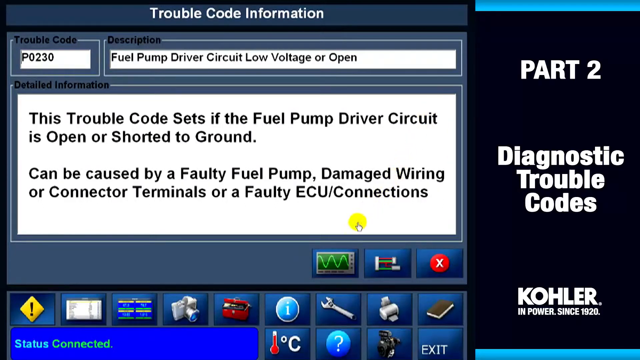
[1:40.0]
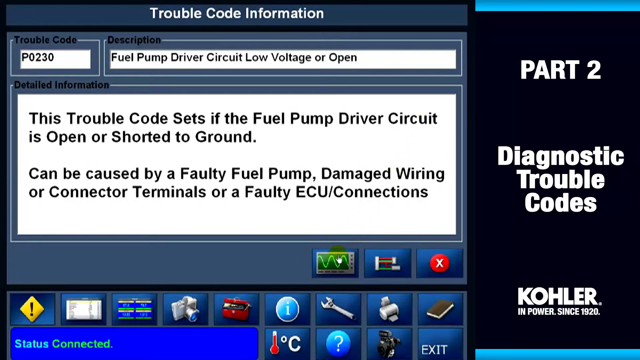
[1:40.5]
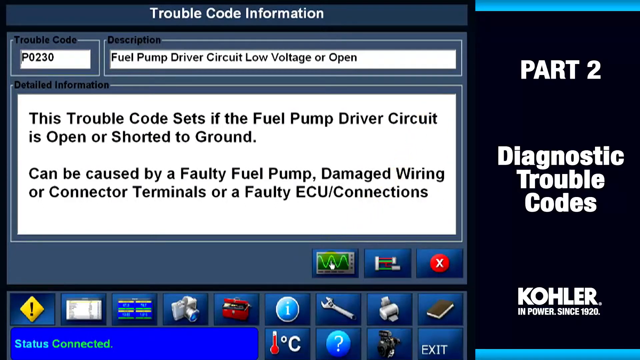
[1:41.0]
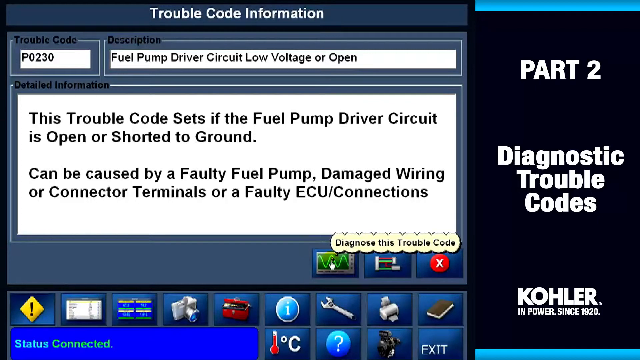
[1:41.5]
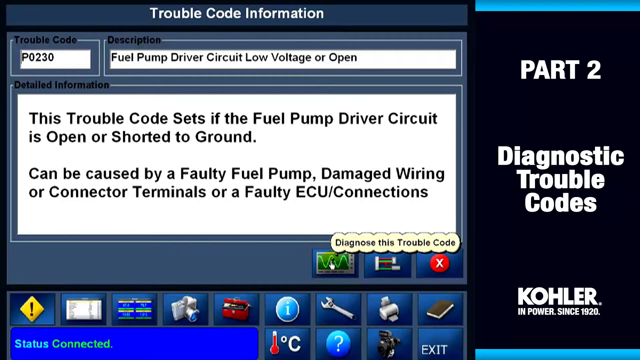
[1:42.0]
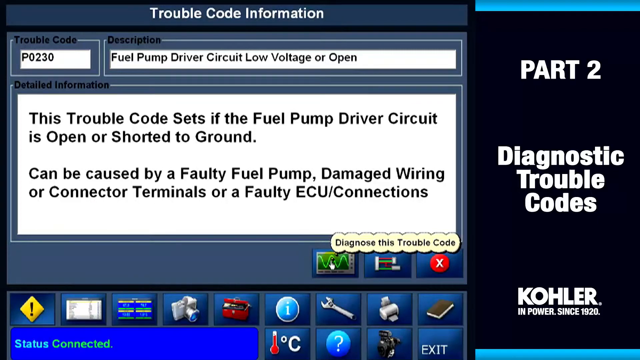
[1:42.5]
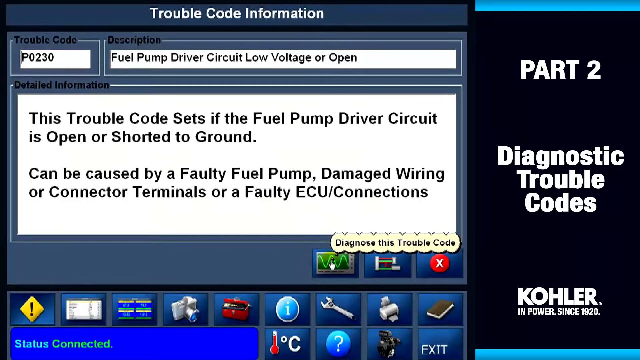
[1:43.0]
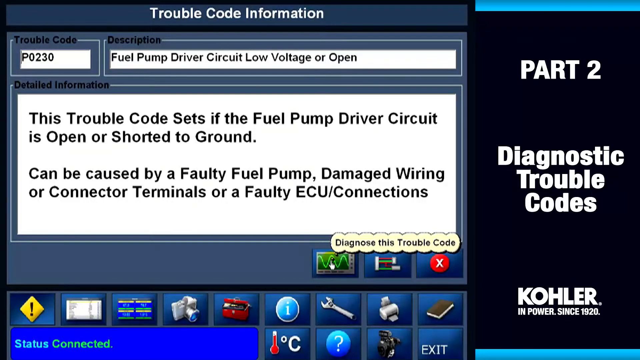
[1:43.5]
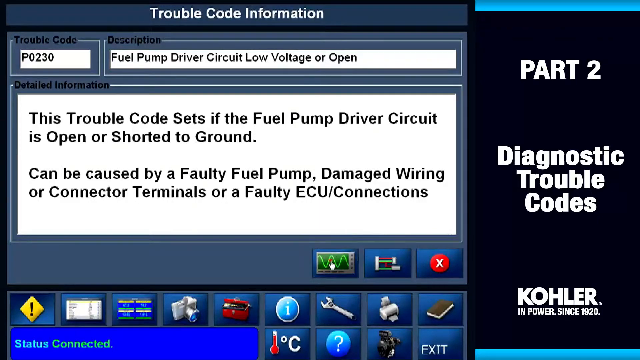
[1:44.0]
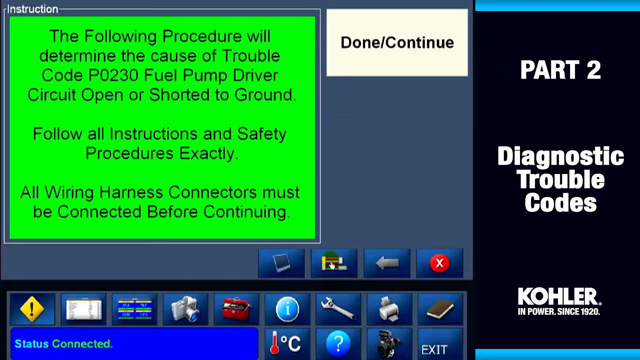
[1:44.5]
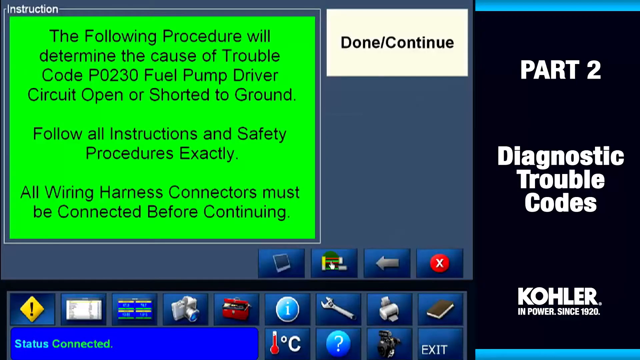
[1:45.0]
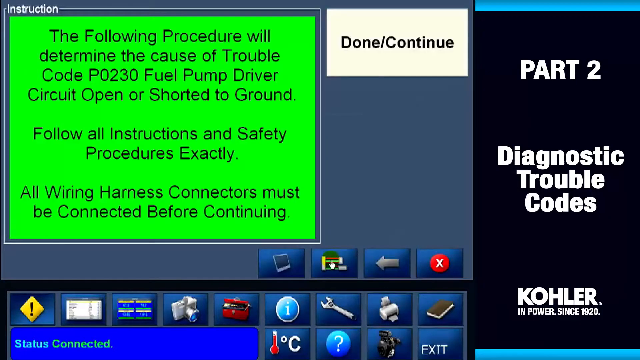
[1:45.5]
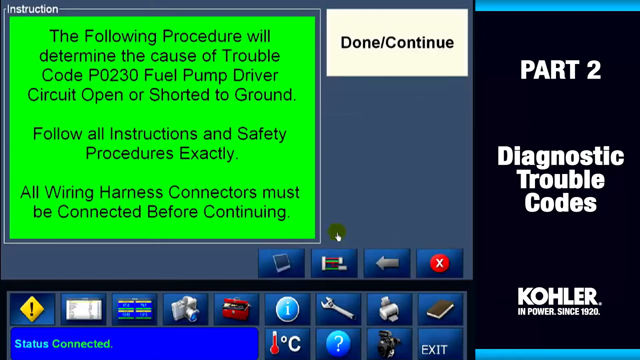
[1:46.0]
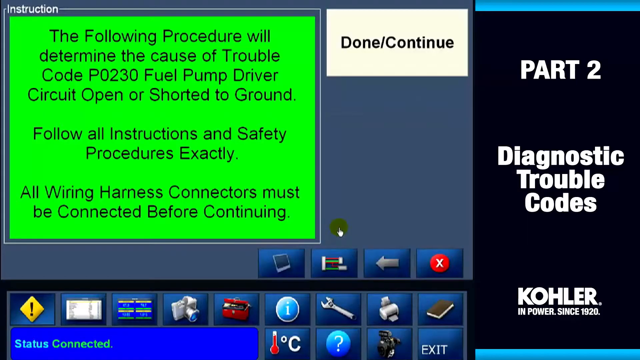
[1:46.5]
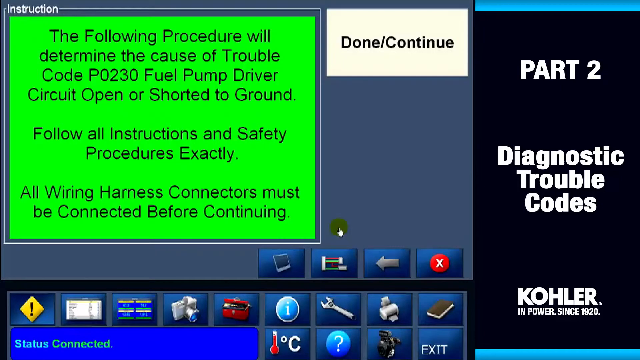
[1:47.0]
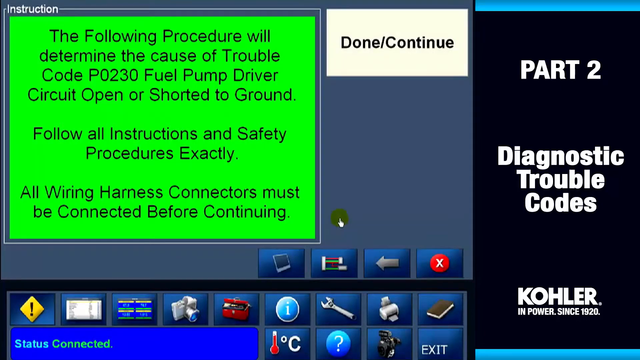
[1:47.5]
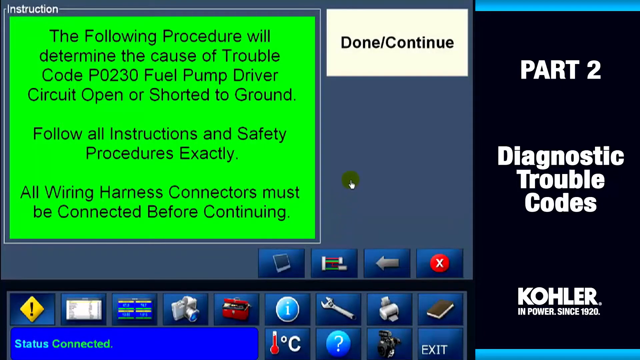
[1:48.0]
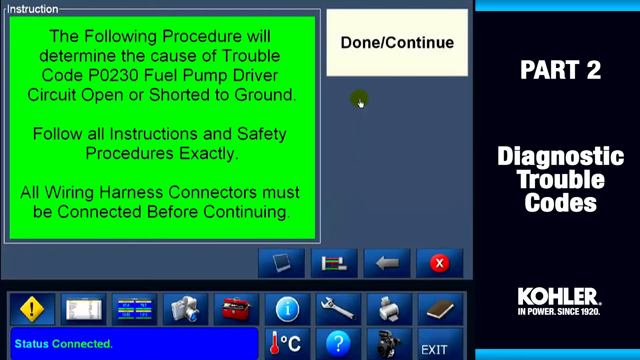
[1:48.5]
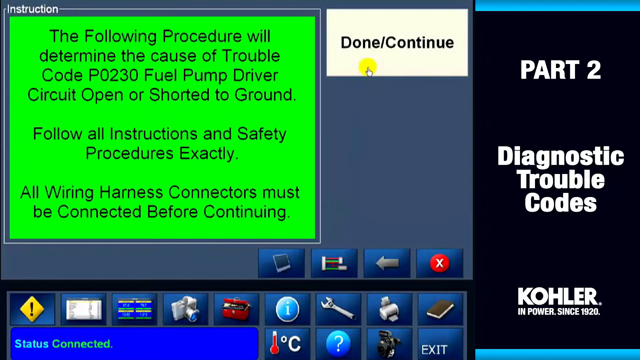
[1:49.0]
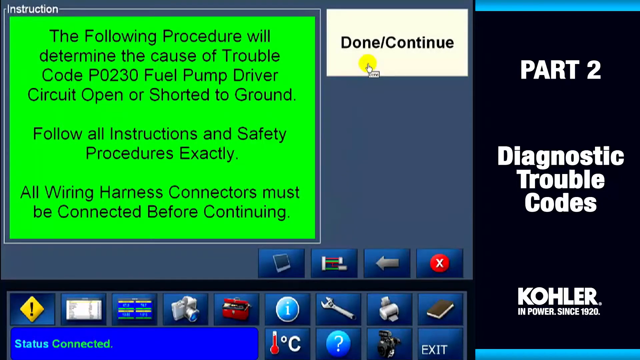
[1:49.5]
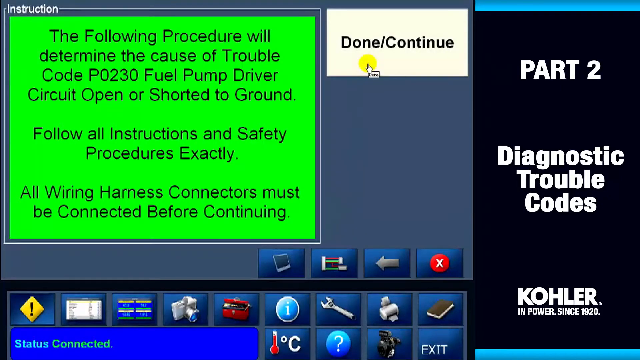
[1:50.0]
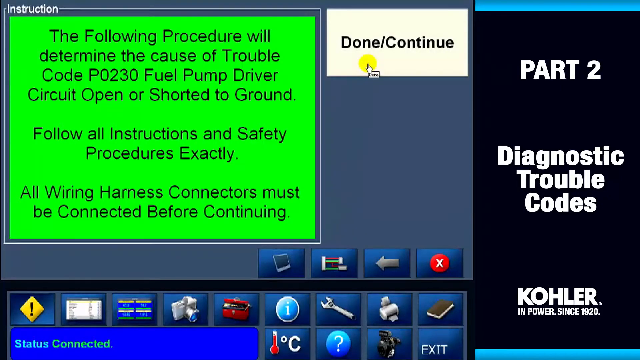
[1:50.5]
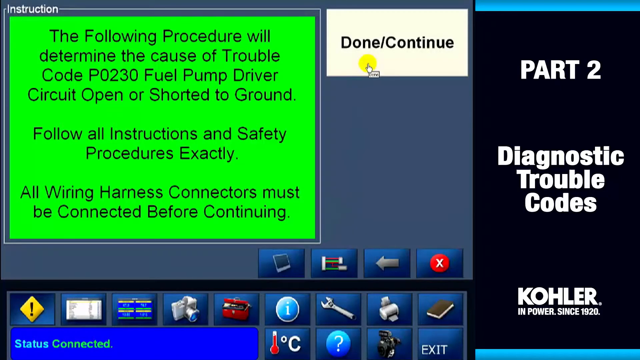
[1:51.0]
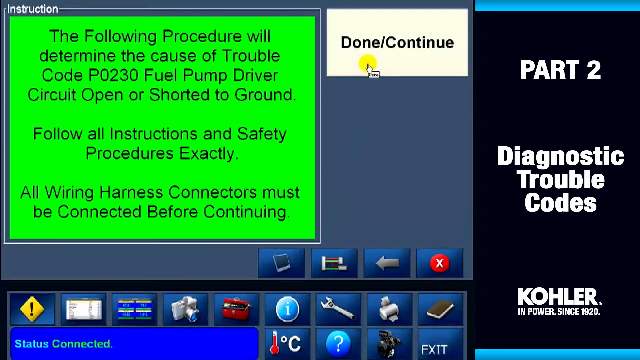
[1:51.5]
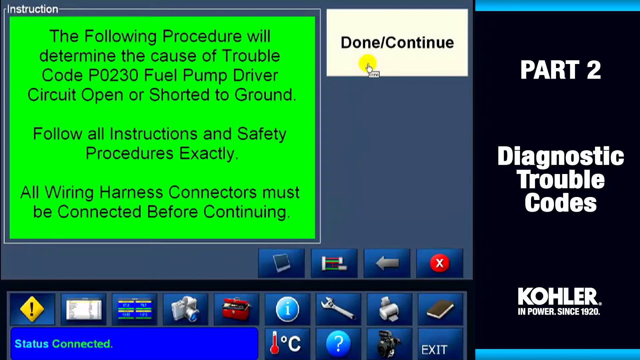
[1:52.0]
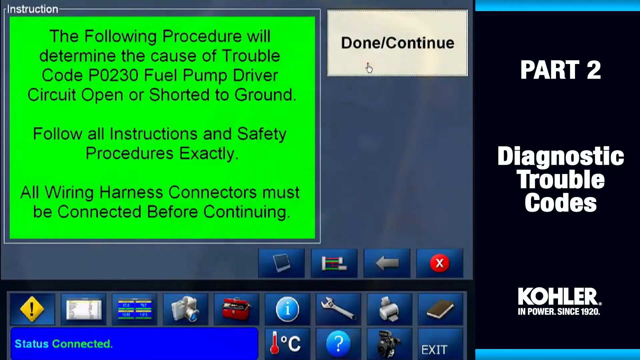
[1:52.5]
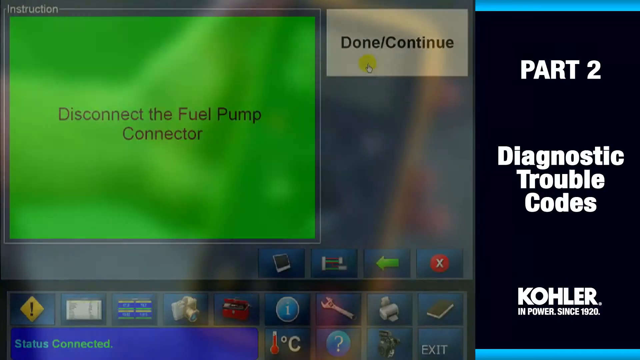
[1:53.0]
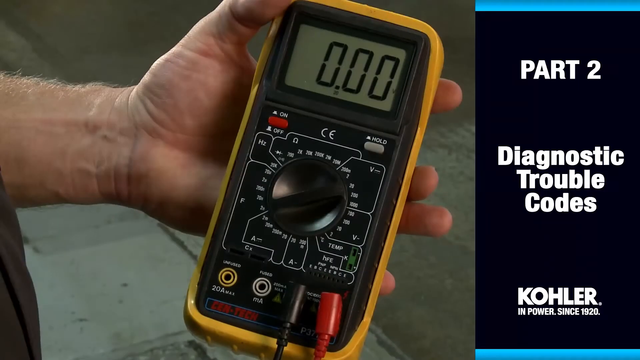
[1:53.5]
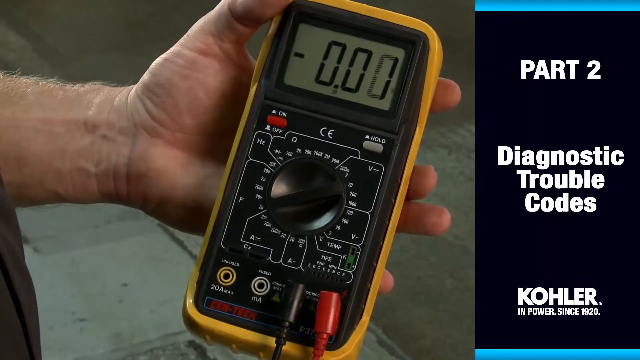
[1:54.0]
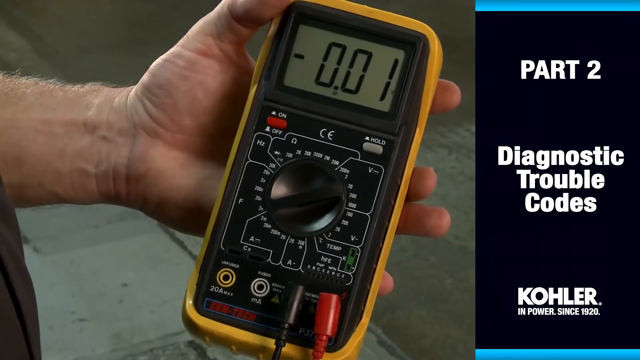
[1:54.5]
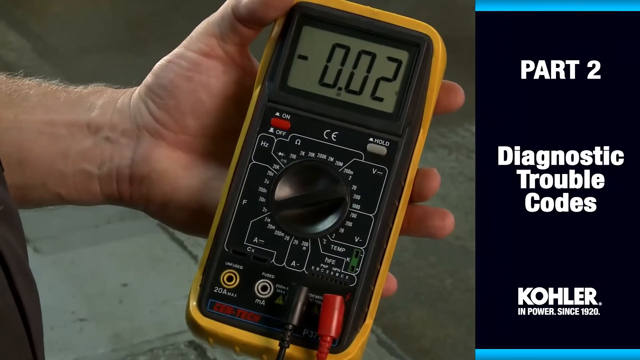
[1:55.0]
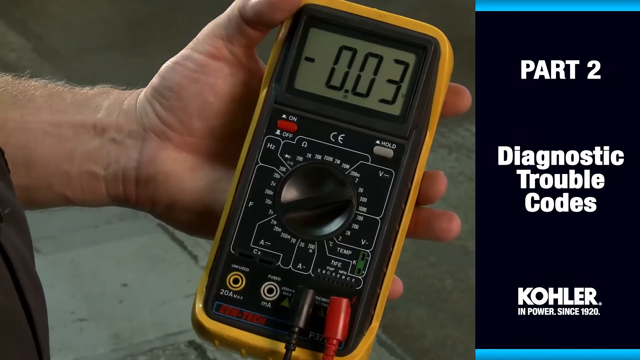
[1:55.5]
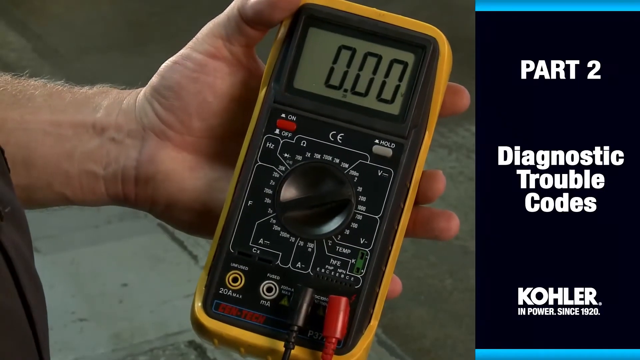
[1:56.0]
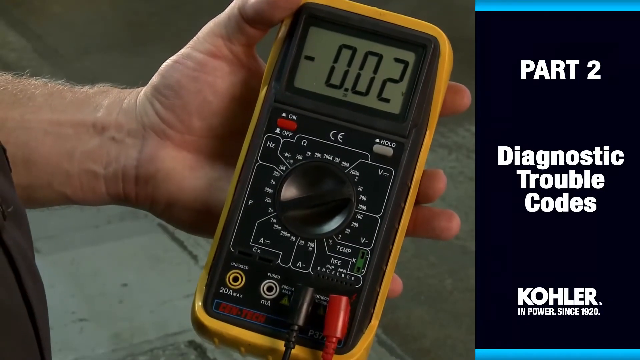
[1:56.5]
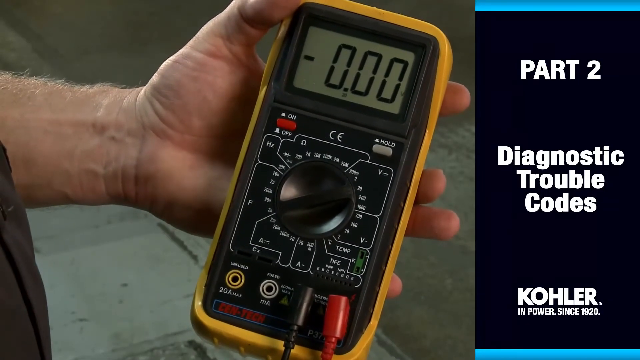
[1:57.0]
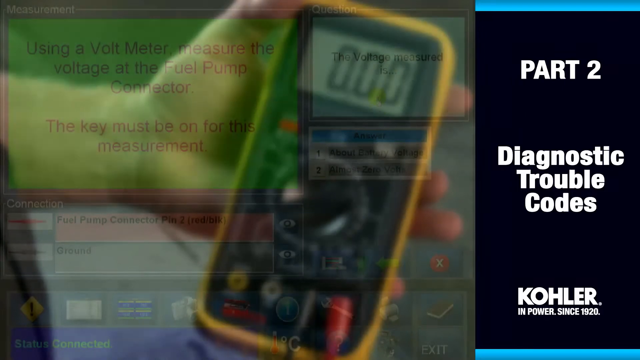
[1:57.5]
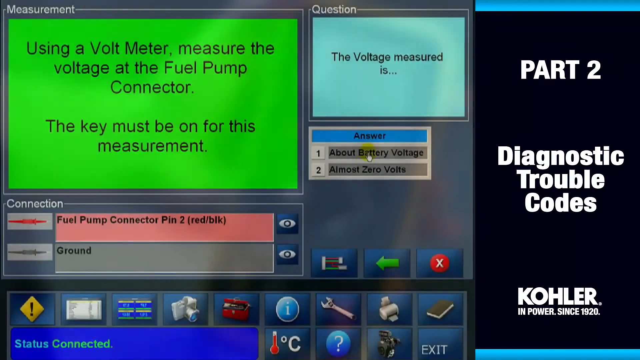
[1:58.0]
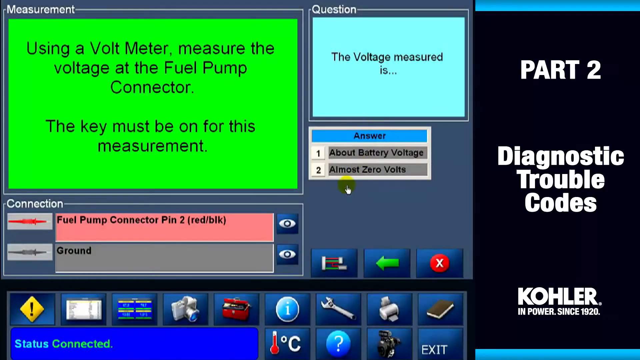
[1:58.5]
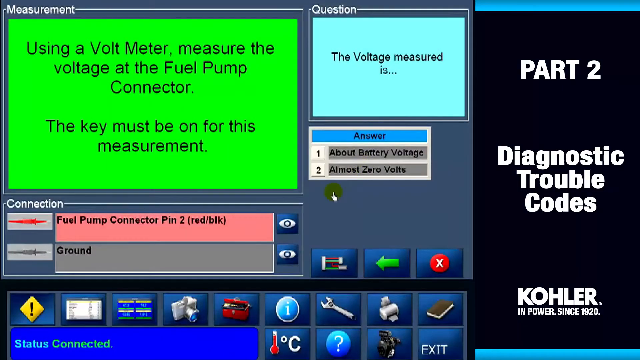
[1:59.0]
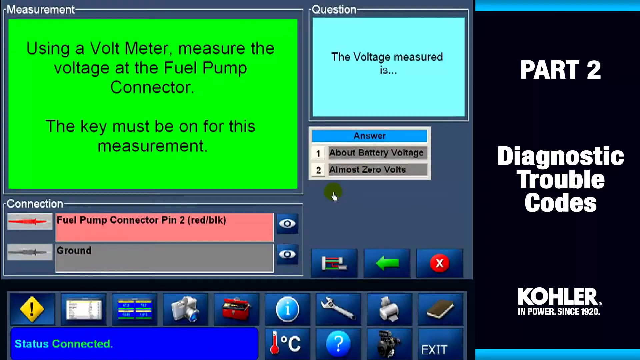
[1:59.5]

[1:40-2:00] A screen reads "Trouble code information", "Trouble code P0230", "Description": "Fuel pump driver circuit low voltage or open", and "This trouble code sets if the fuel pump driver circuit is open or shorted to the ground. Can be caused by a faulty fuel pump, damage, wiring or connector terminals or faulty ECU connections." A button reading "Diagnosis trouble code" is clicked, and the screen reads "The following procedure will determine the cause of trouble code P0230. Fuel pump driver circuit open or short to the ground. Follow all instructions and safety procedures exactly. All wire harness connectors must be connected before continuing". The cursor moves to the "Done / continue" button and clicks it. Someone's hand is then shown on a black and yellow device for diagnosing car trouble codes, and the screen reads "Using a voltmeter measure the voltage at the fuel pump connector. The key must be on for this measurement."